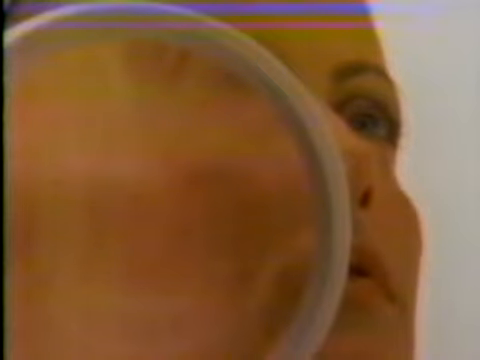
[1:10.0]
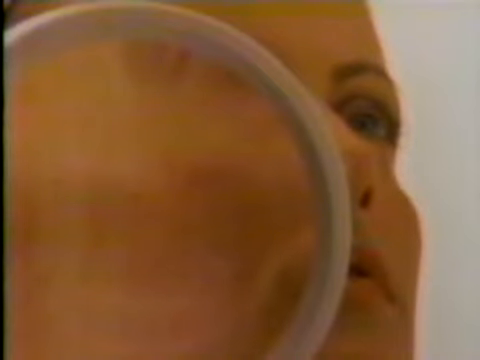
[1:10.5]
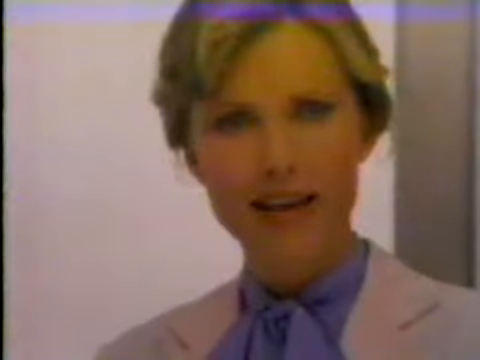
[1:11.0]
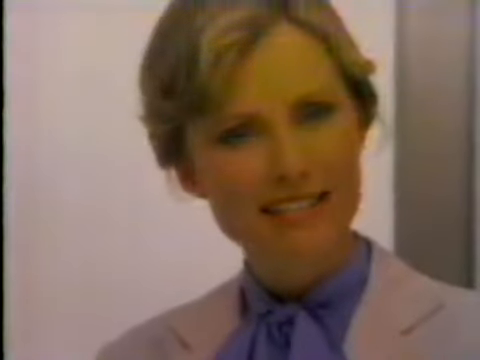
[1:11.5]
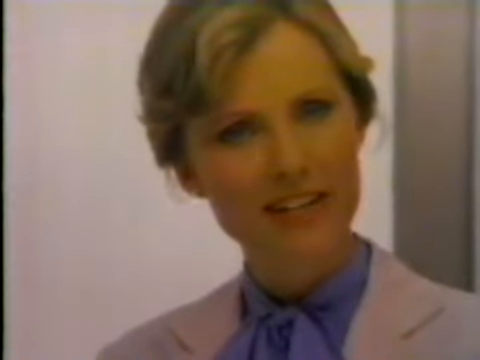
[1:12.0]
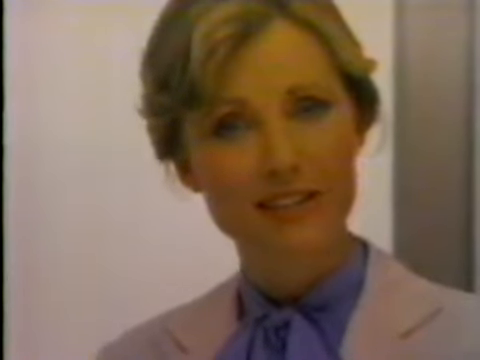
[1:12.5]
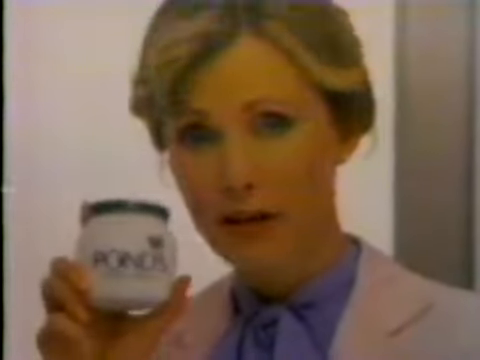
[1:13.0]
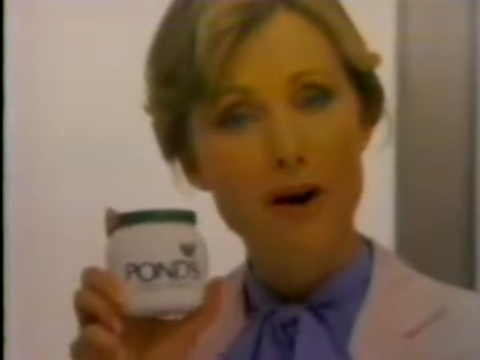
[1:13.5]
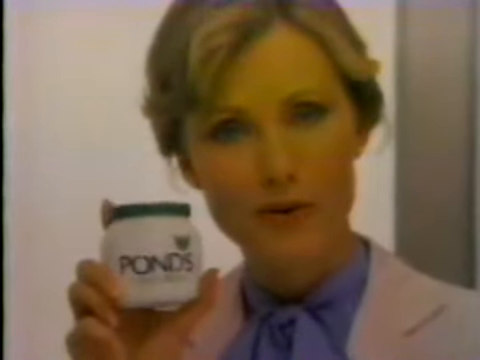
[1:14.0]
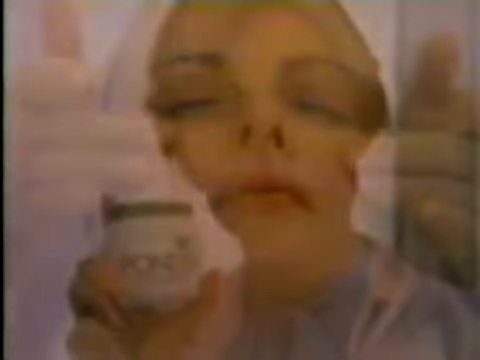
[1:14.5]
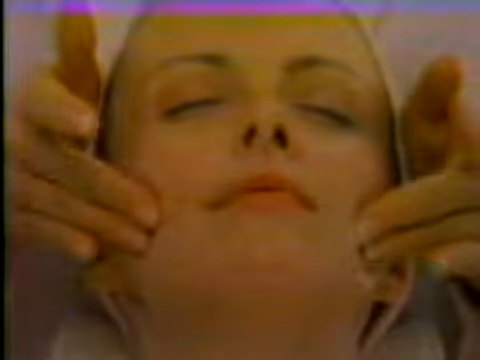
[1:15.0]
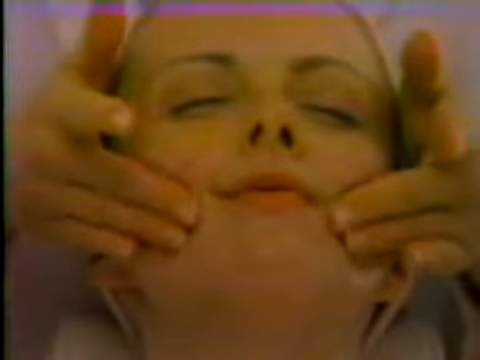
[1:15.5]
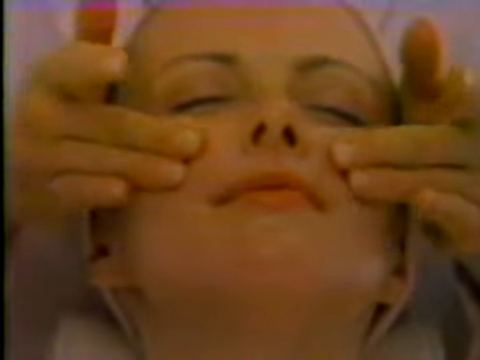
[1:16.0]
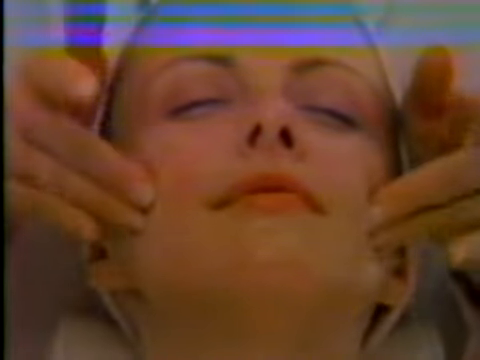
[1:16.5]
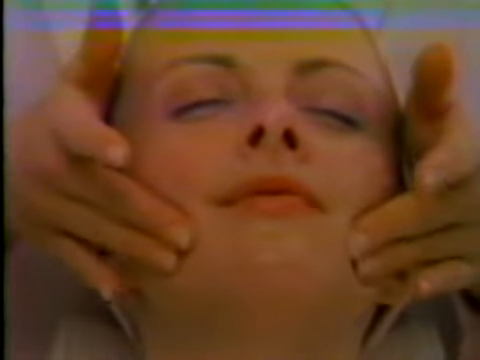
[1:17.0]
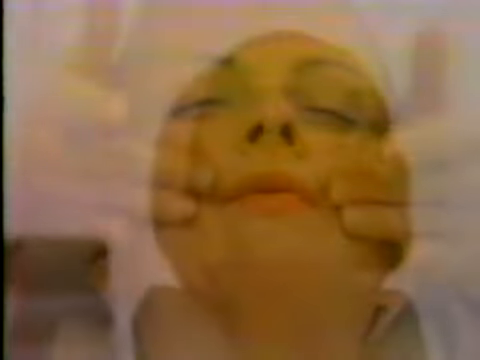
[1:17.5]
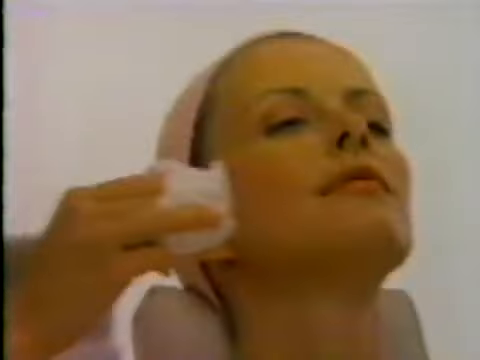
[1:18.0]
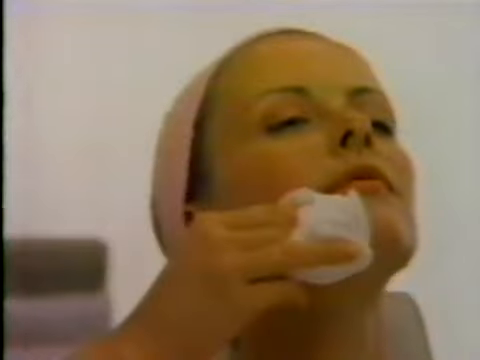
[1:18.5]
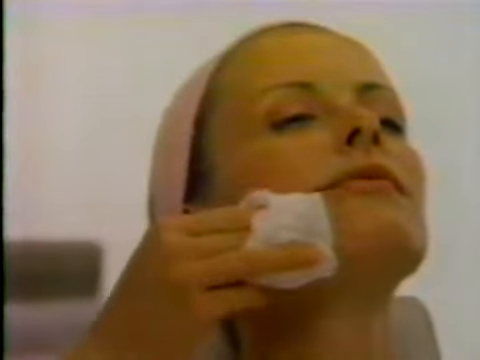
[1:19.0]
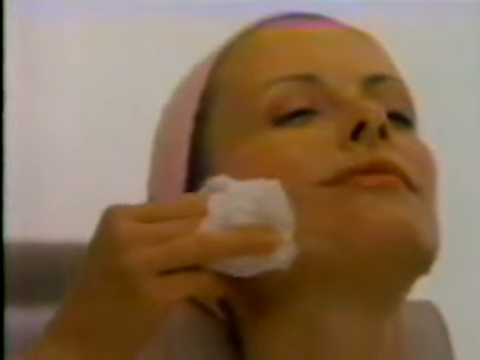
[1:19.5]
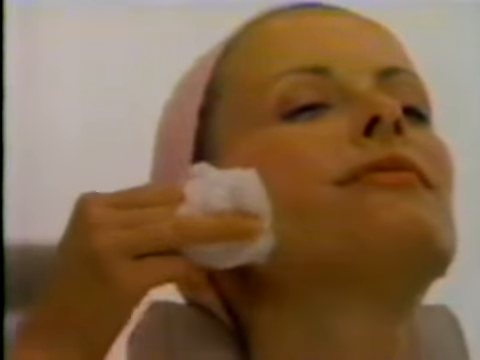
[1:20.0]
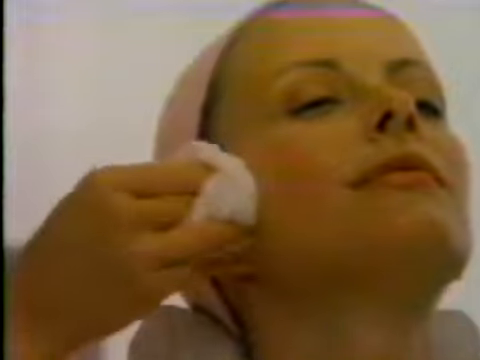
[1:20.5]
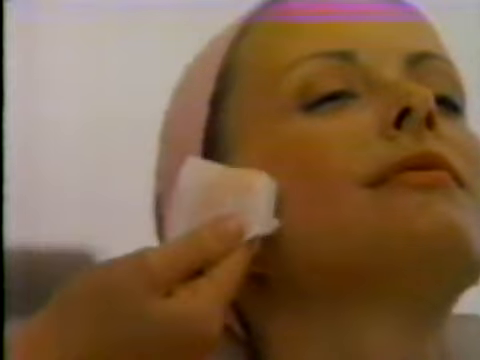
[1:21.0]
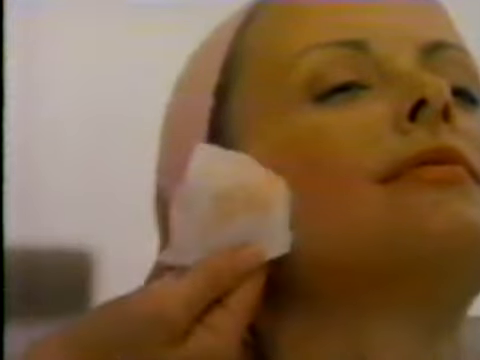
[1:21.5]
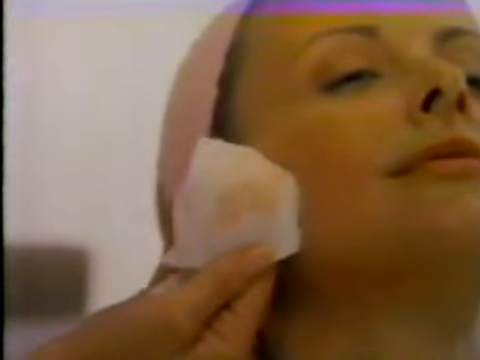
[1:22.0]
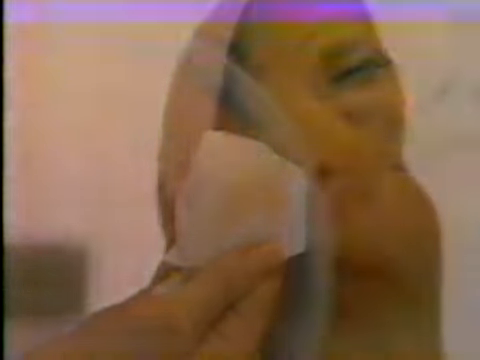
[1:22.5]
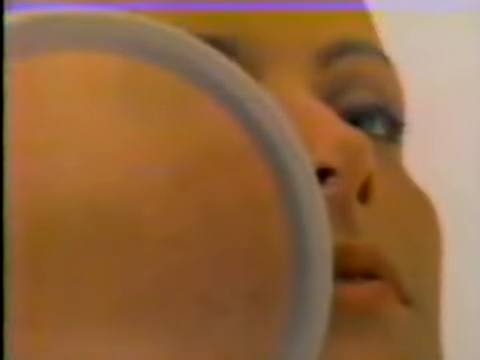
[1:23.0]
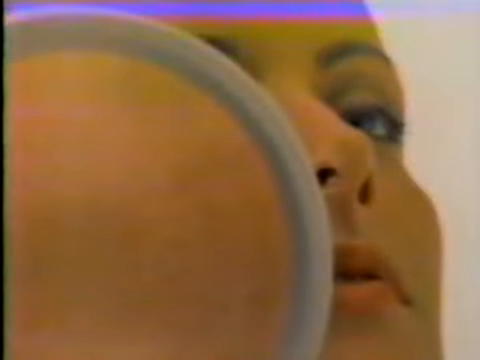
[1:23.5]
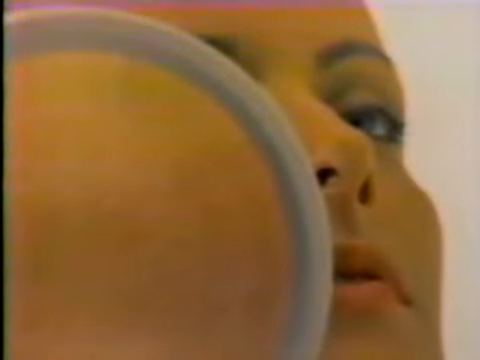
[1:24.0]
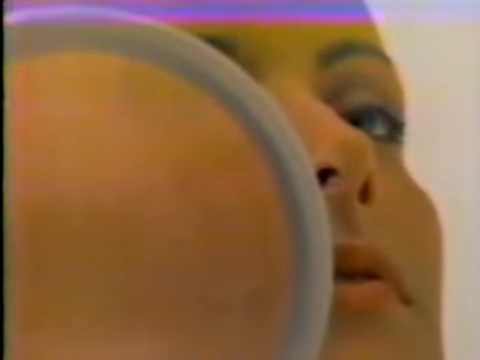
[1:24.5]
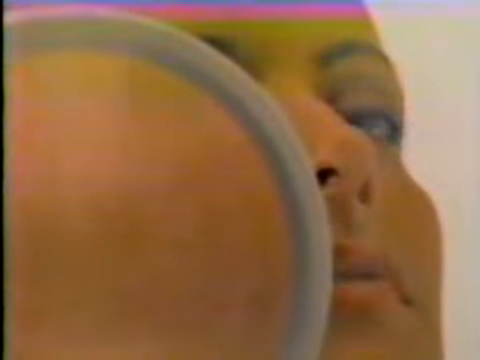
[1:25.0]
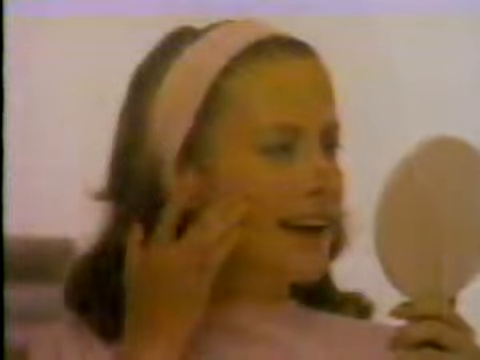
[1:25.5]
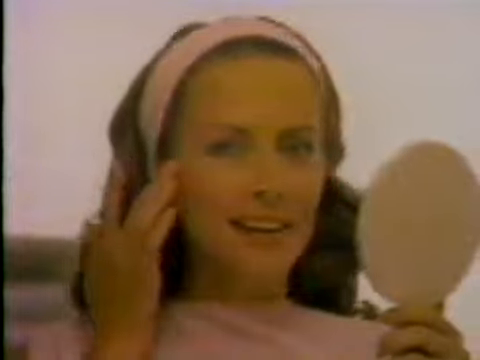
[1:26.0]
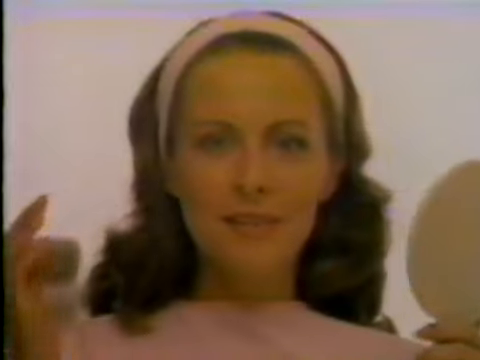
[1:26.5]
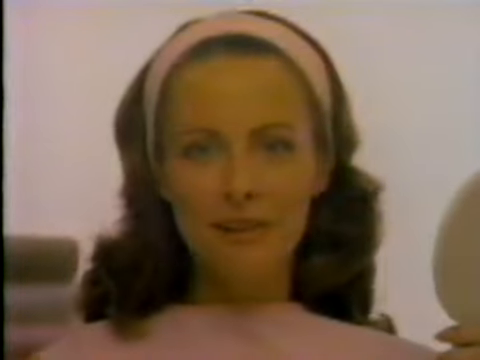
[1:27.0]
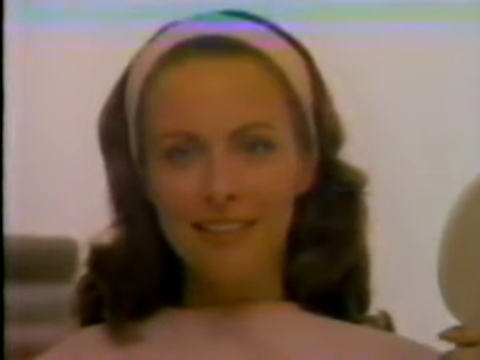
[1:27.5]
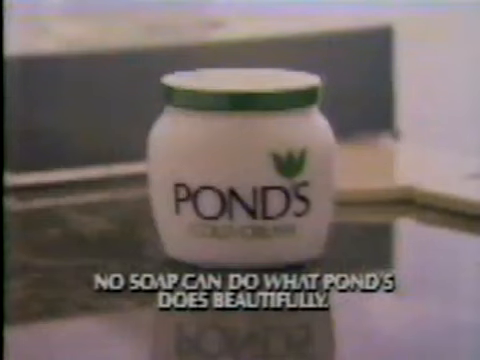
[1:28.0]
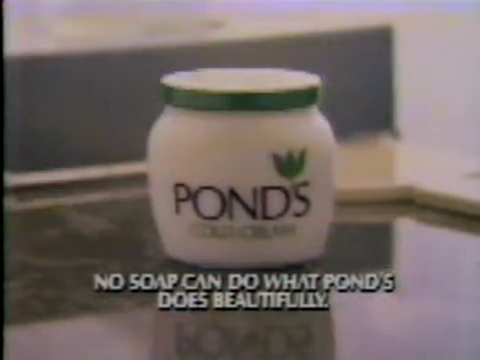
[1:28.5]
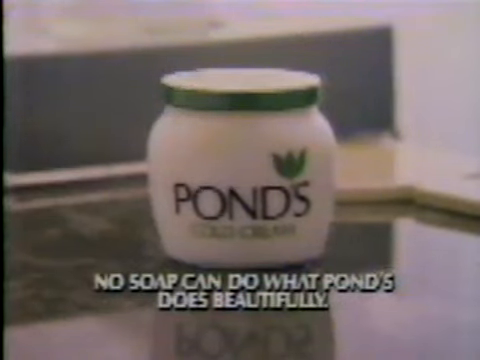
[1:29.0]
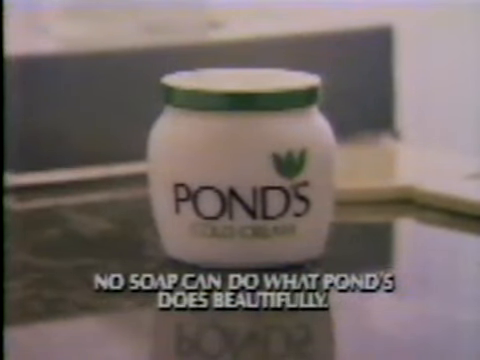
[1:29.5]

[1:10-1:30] The woman who seems to be a facial doctor checks the other lady's face and recommends something for her to use. She shows her the Pond's product, and the lady starts using it on her face; the doctor lotions the patient's face with the product and holds a tissue to show that it removes the dirt from the skin. The lady then shows the end results after using the product. At the end, text reads "no soap can do what Pond's does beautifully".